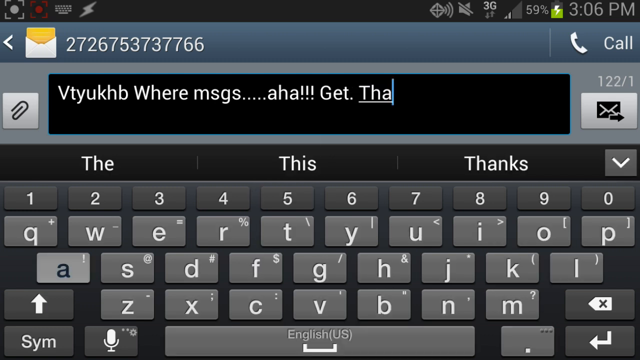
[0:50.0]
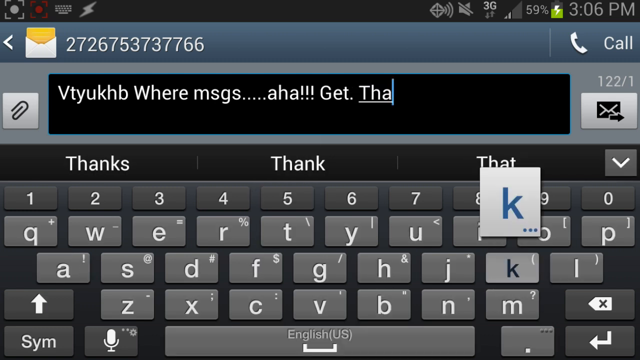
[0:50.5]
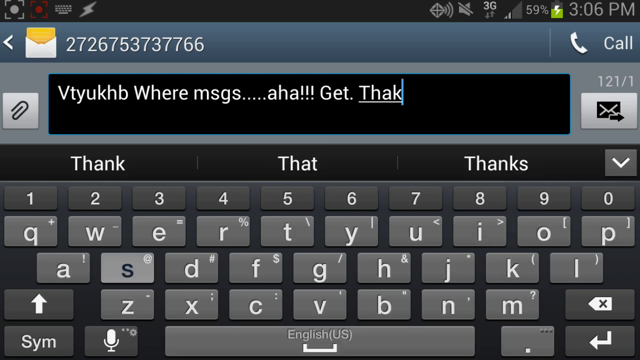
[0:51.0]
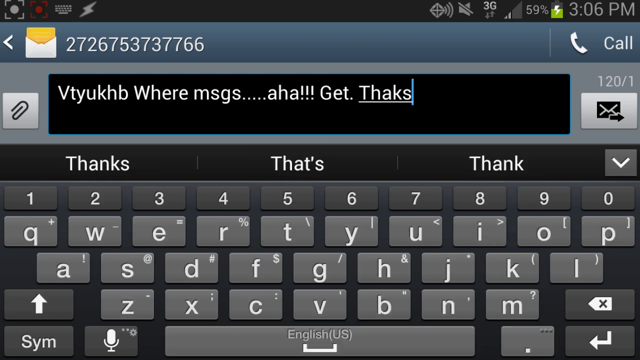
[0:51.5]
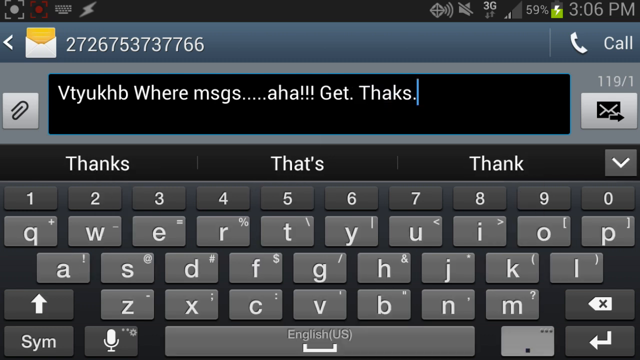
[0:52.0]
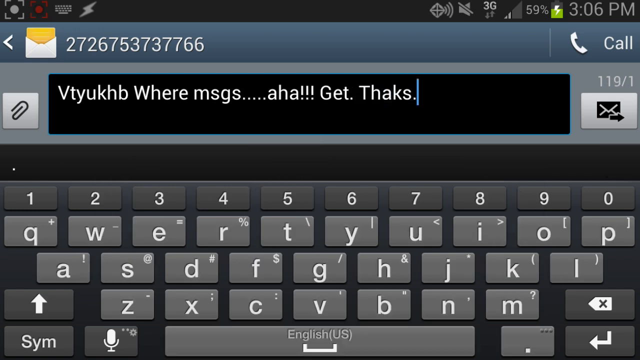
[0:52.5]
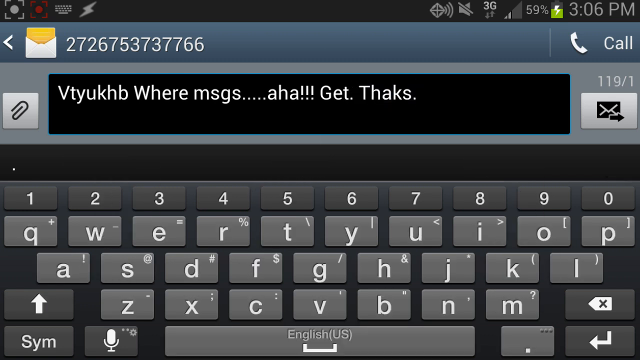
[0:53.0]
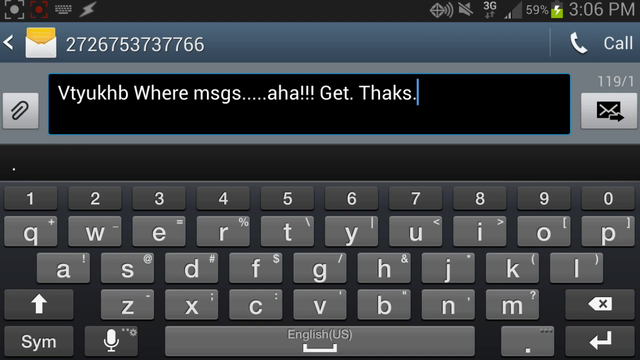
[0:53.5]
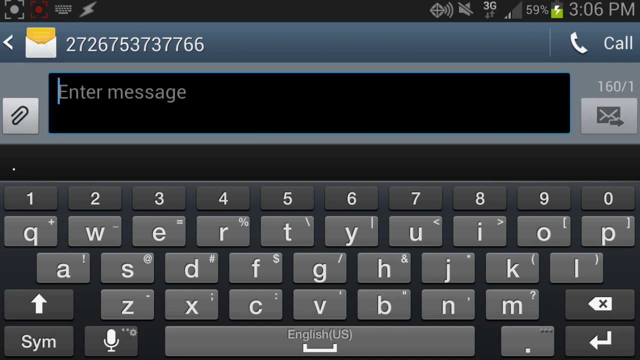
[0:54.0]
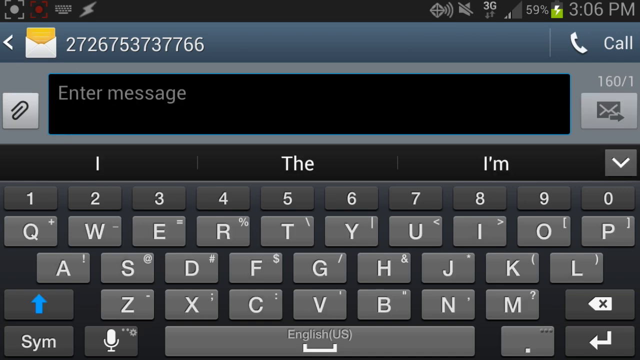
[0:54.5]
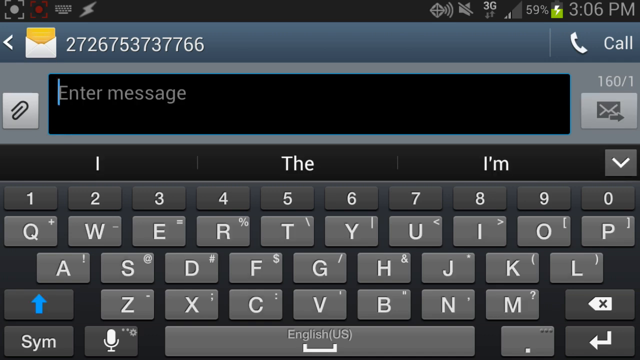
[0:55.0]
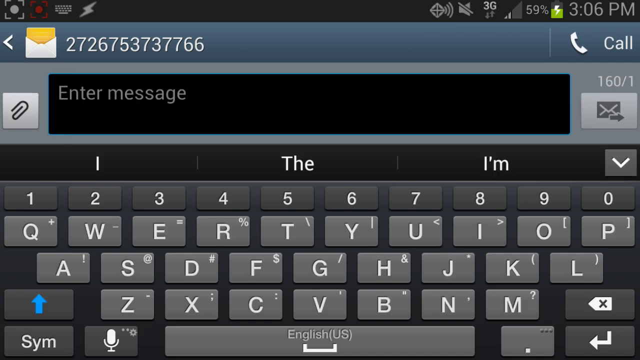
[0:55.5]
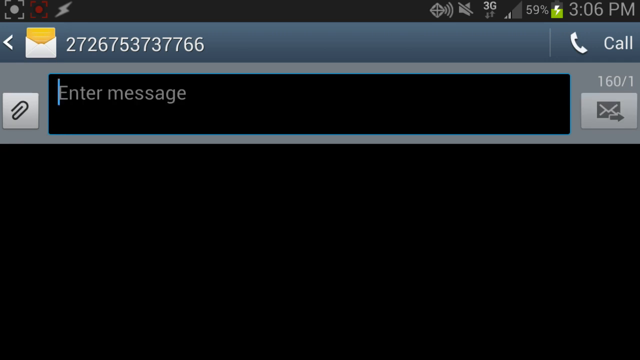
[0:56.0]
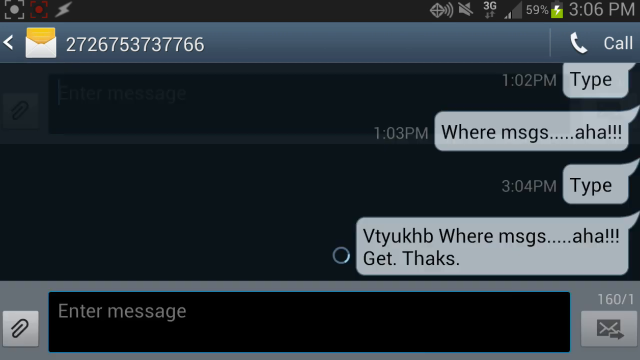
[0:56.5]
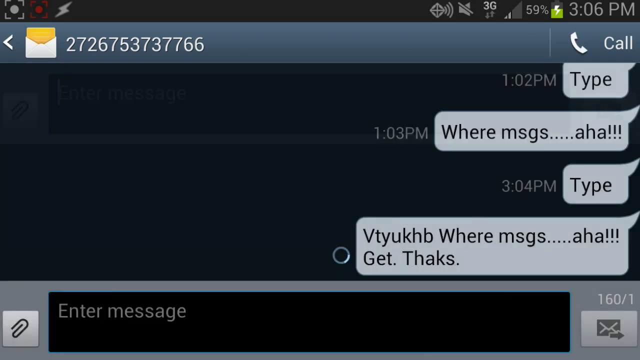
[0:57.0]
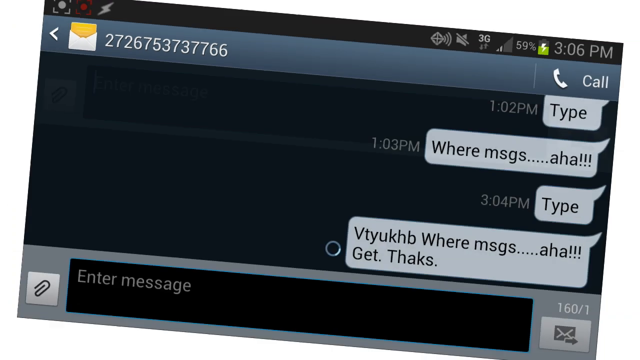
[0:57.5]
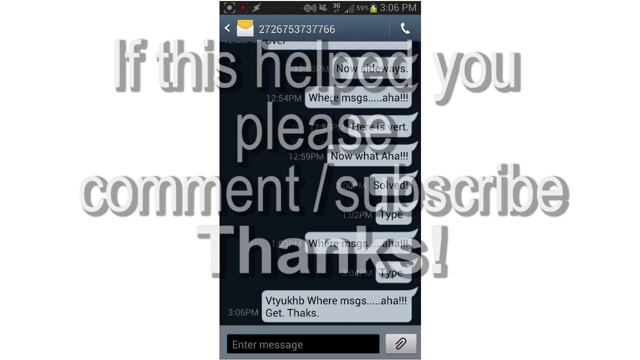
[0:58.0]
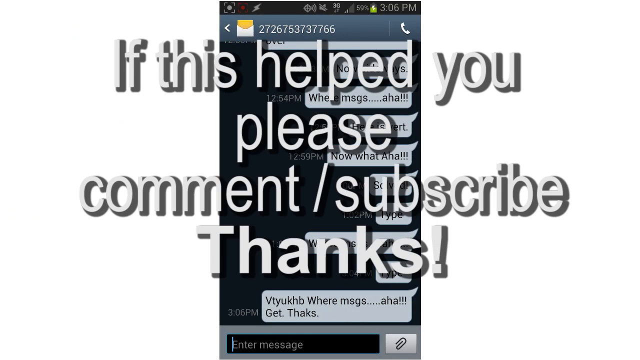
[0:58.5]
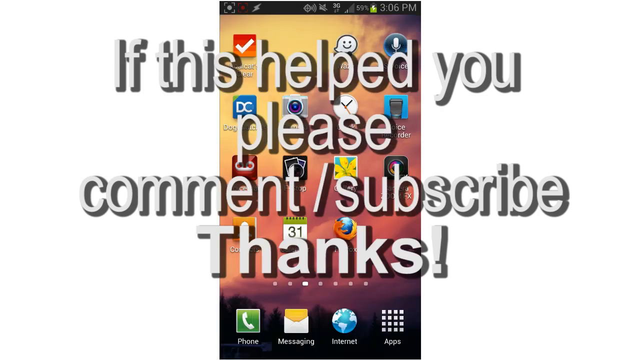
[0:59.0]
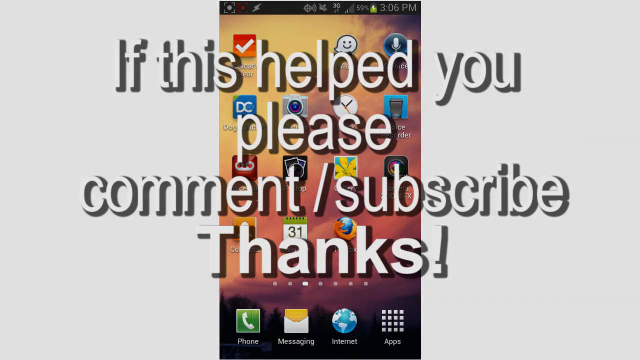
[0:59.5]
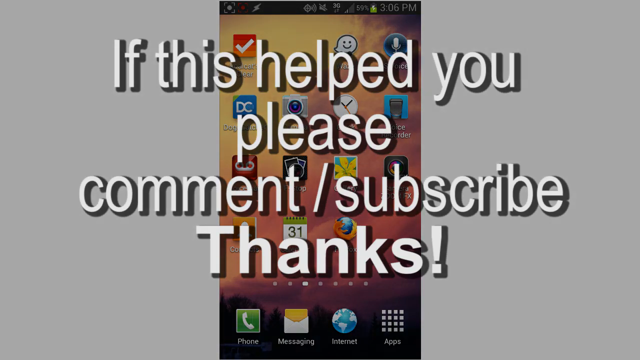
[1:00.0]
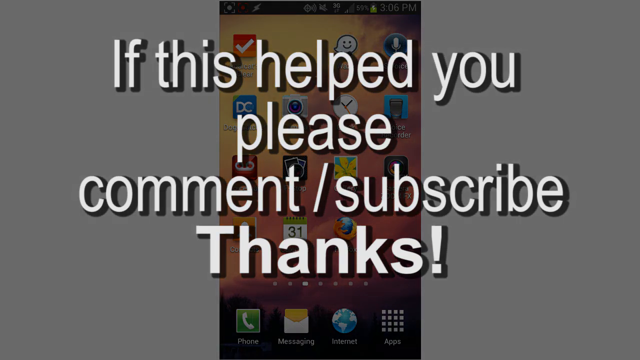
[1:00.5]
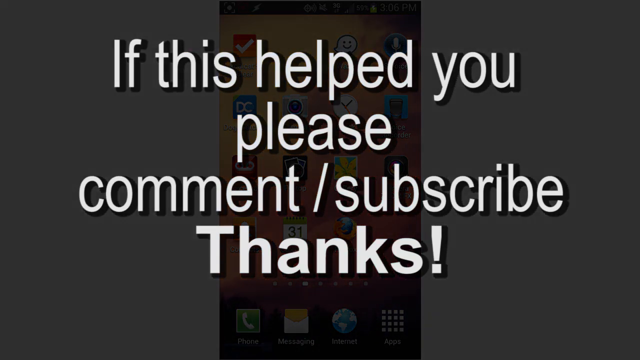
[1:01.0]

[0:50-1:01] The video continues with the keyboard open horizontally as a message is typed, along the lines of "where's the message?" and "aha, where's my shoes," apparently playing the part of someone lost and unsure what to do. The screen recording then fades into black while white text becomes more and more visible, as the screen returns to the vertical position at the phone's home screen. The video ends with a thank-you message asking viewers to comment and subscribe if it helped them.